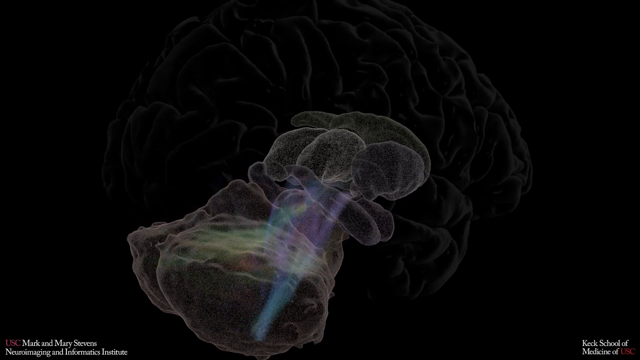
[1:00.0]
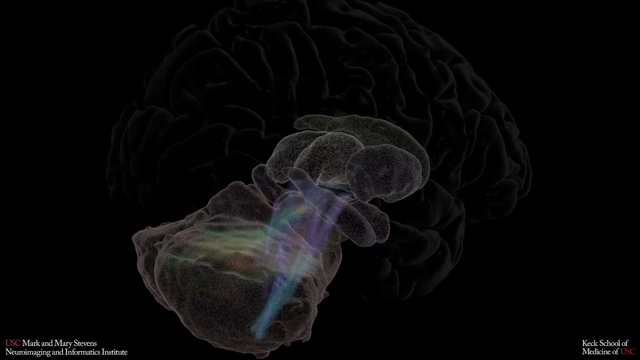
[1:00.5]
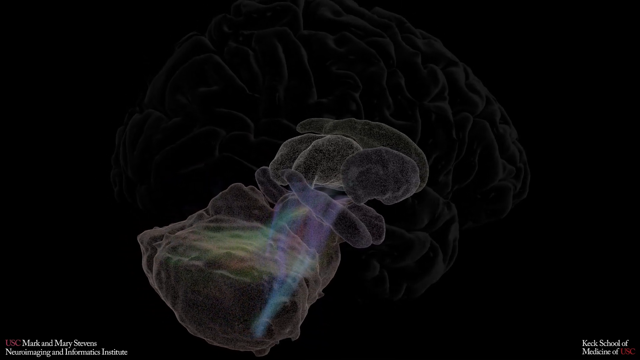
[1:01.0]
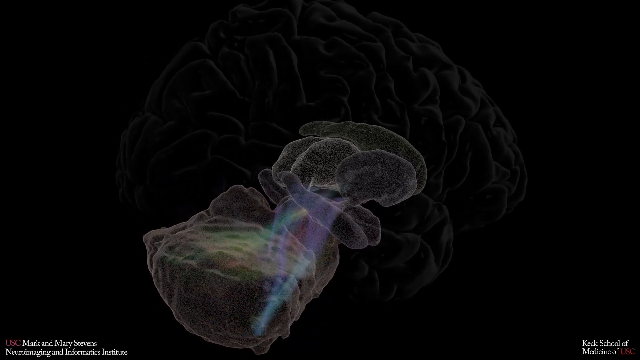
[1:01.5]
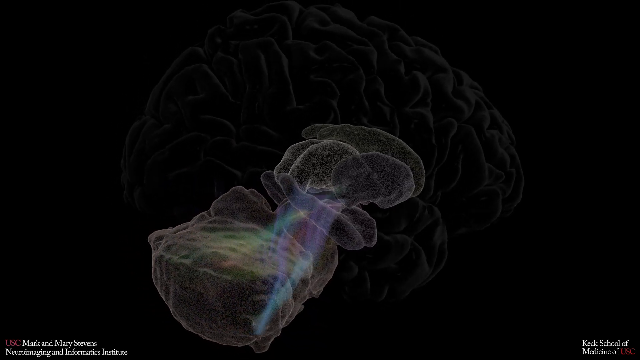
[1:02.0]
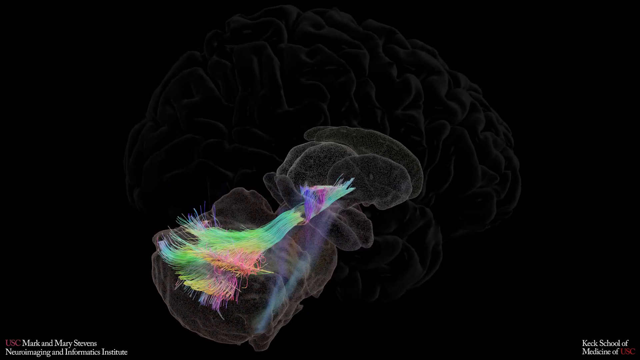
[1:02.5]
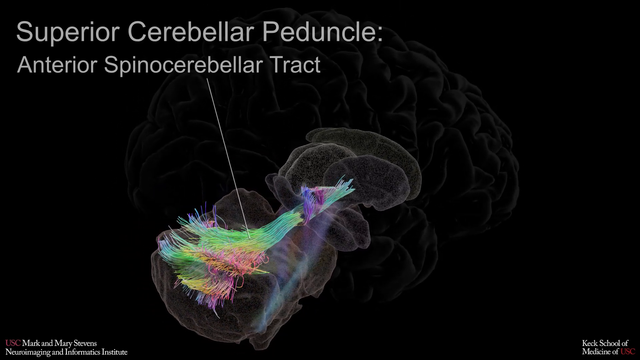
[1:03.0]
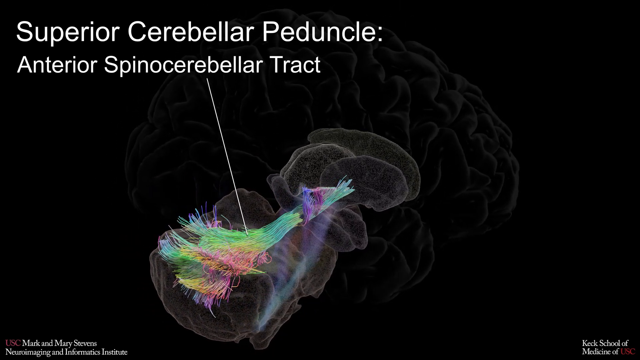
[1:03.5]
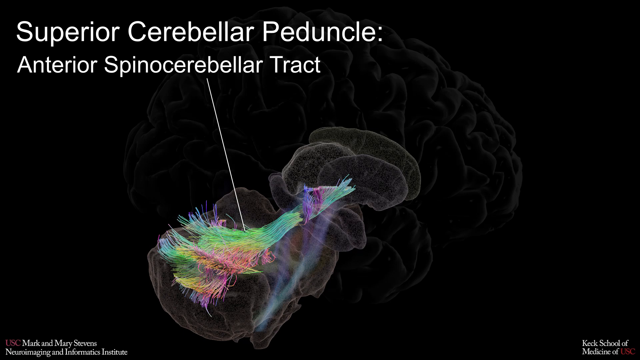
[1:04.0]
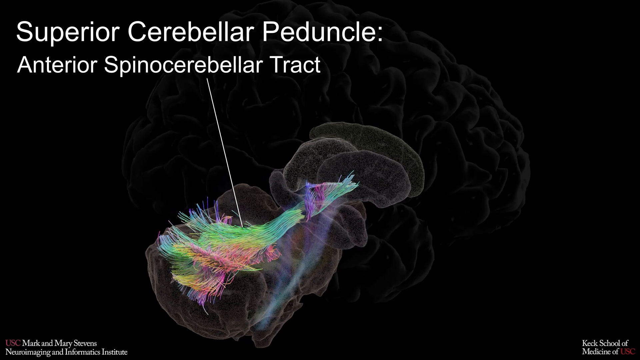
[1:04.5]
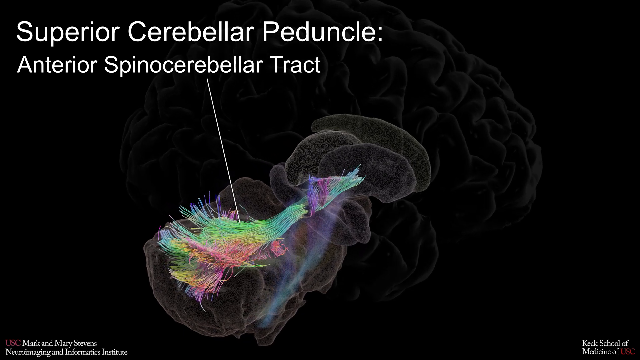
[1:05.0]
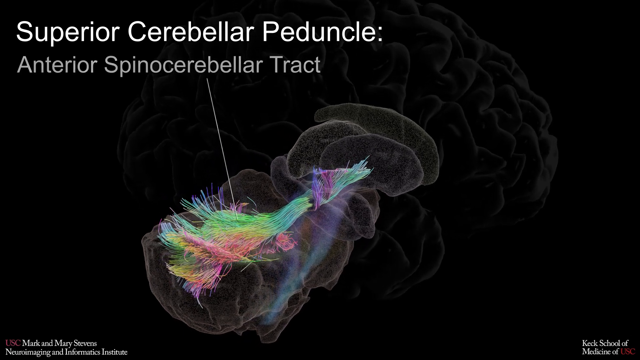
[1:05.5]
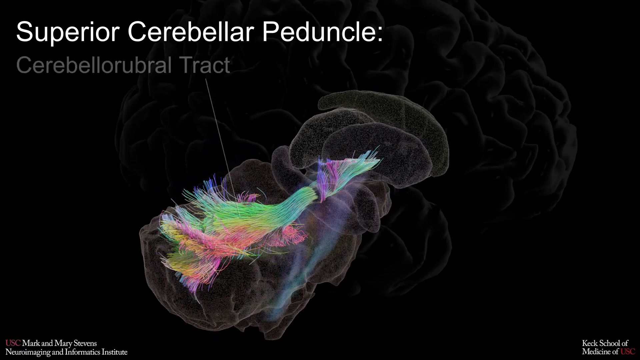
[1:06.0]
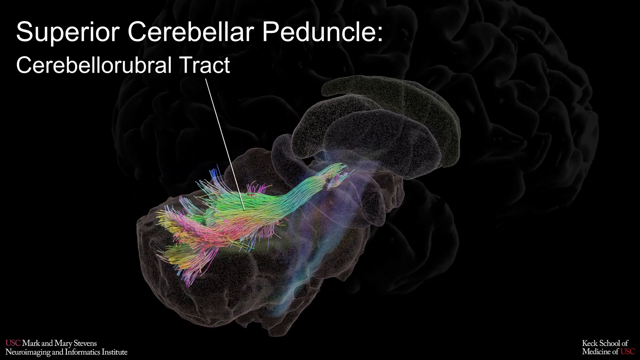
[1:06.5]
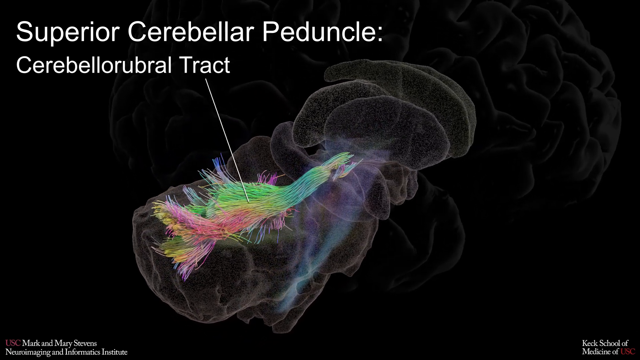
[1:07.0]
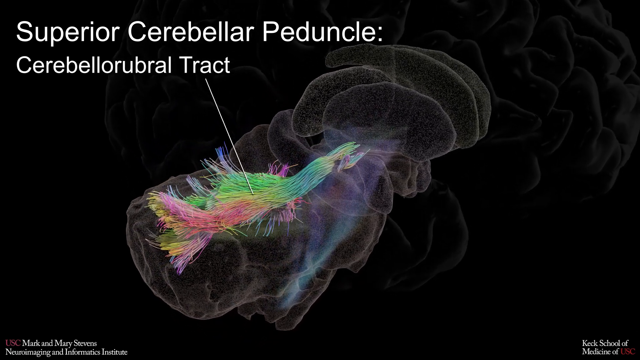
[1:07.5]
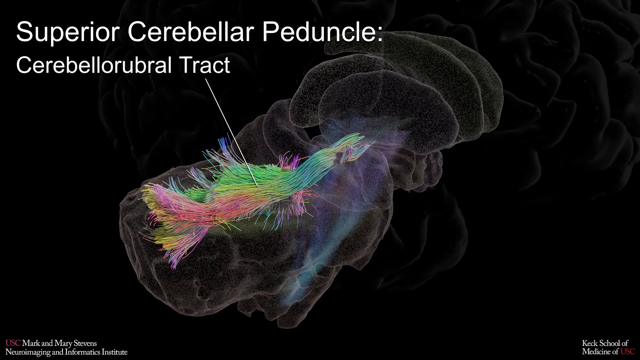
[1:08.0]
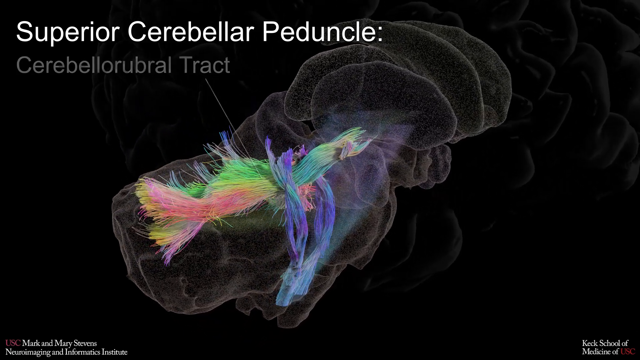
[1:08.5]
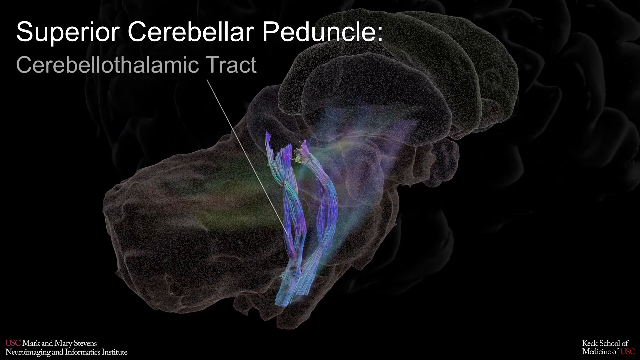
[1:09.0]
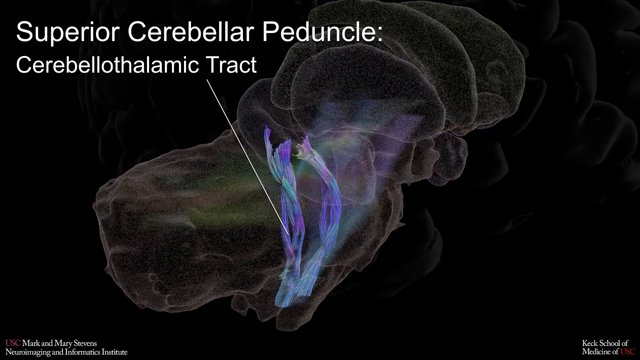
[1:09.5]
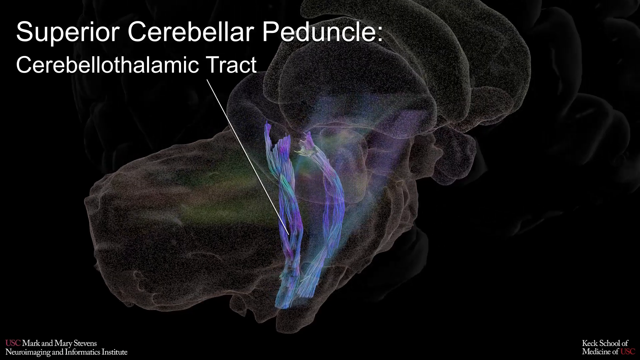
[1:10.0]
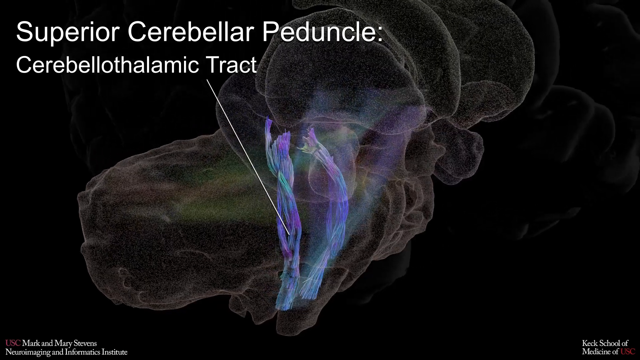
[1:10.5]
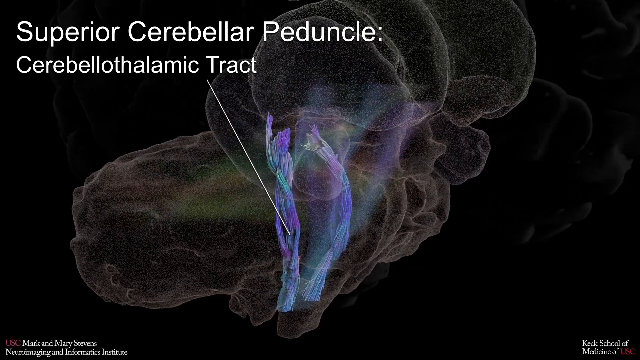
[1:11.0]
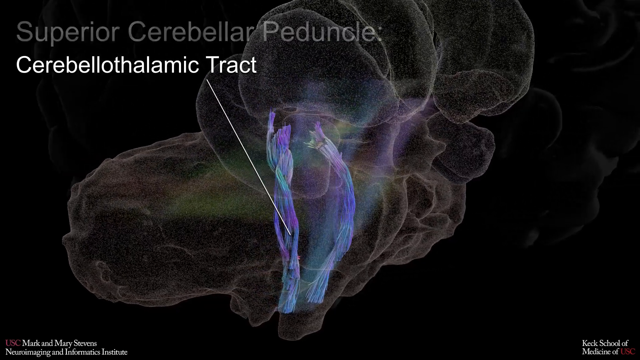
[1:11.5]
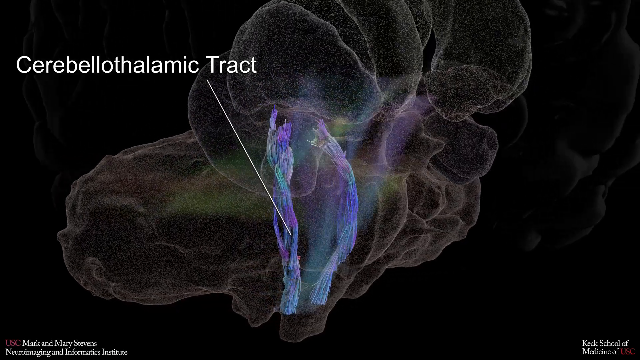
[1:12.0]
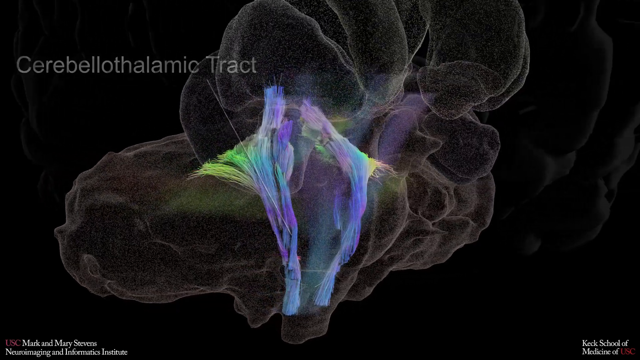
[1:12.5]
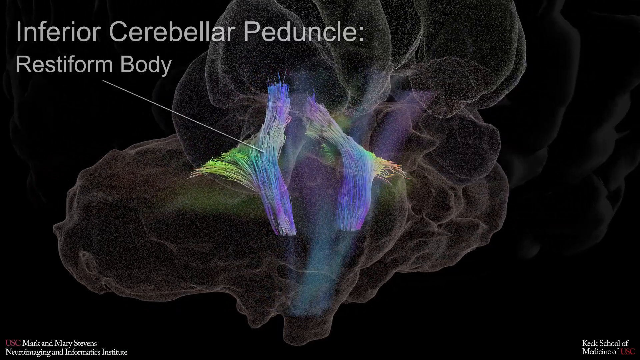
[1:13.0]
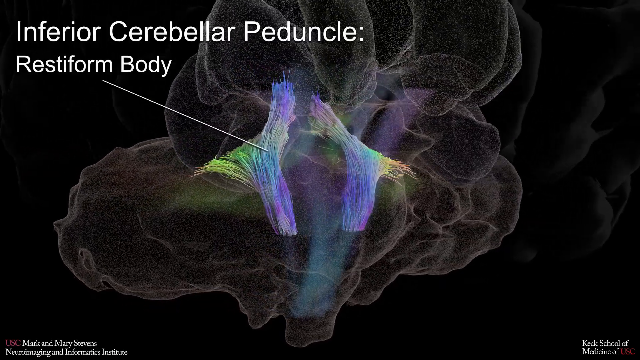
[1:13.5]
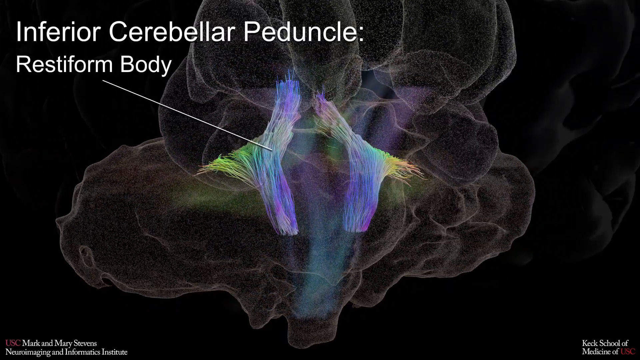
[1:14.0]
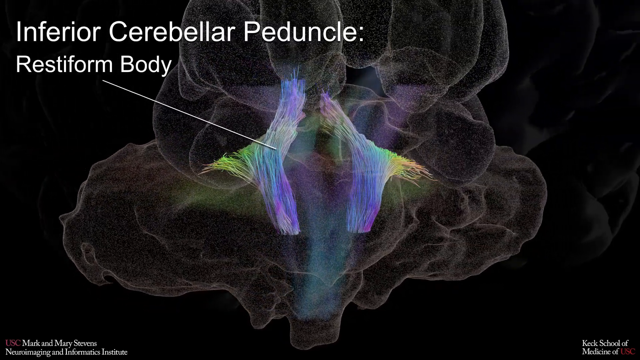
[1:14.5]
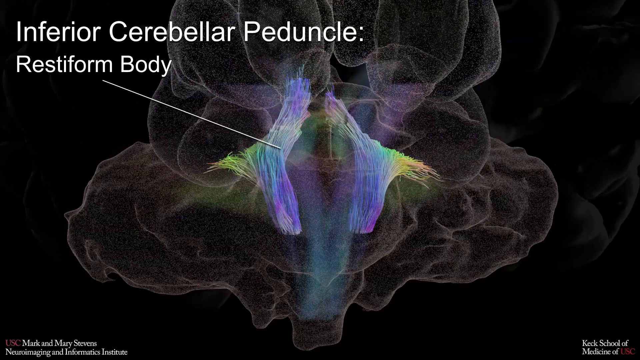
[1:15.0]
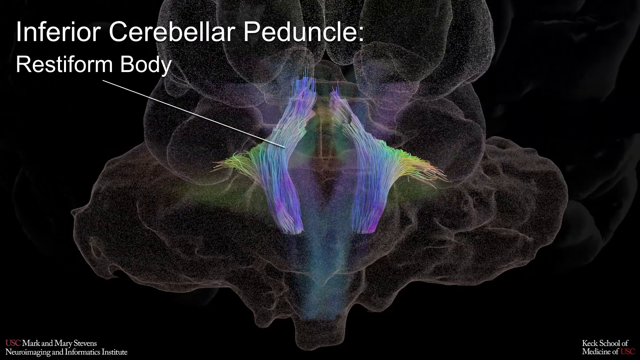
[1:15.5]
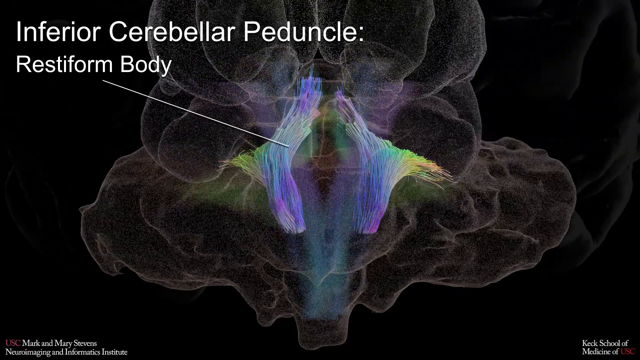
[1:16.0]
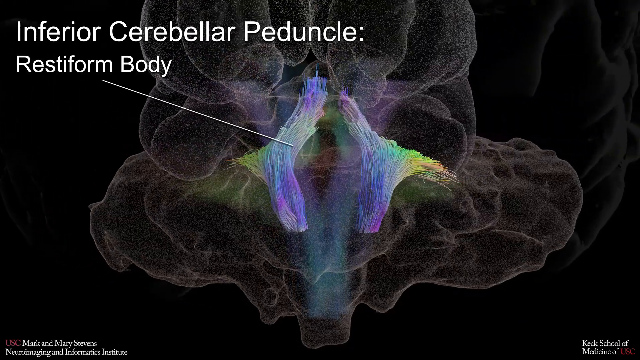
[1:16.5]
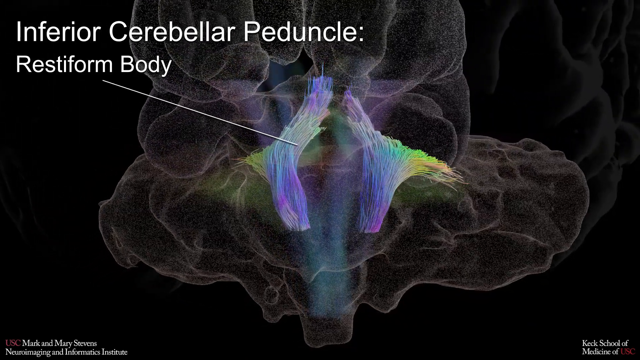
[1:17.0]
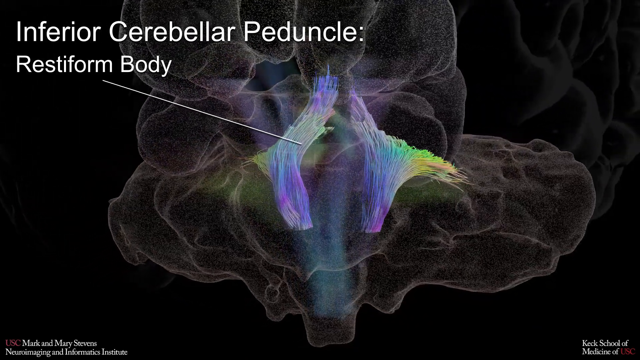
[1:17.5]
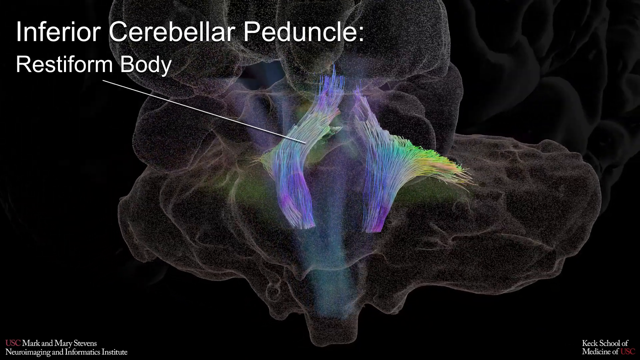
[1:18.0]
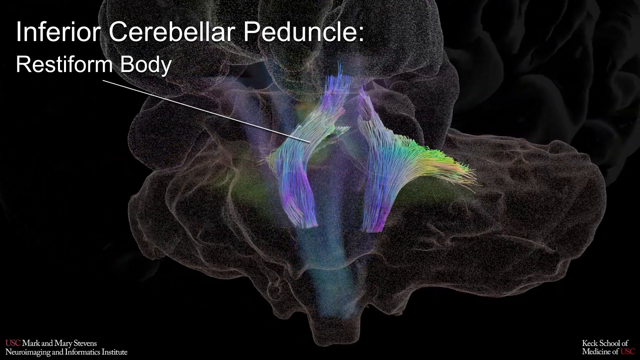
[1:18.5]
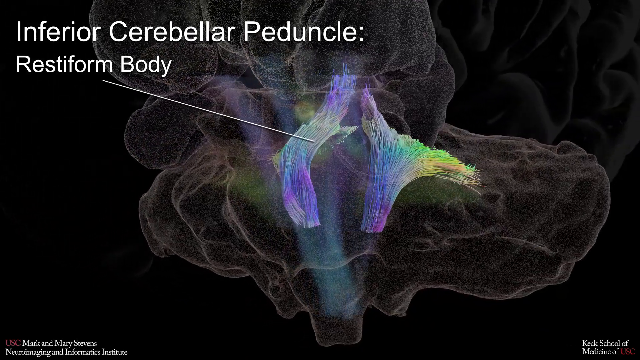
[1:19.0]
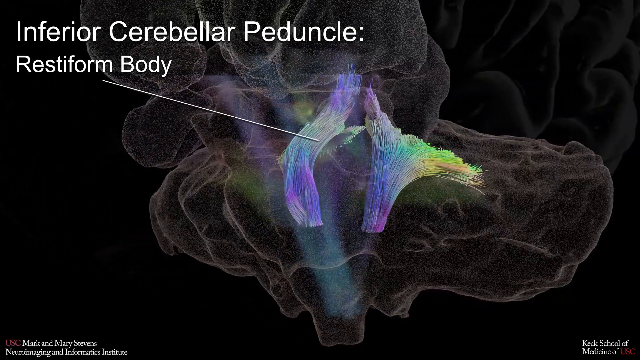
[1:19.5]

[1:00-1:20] A kind of gray and white brain, somewhat transparent, appears against a black background. Parts of the brain are visible, with kind of holographic colors inside, including purple, yellow, green and blue. The brain moves on camera, and fibers in neon colors pop up with a line connecting them to text that reads "superior cerebellar peduncle" and "anterior spinal cerebellar tract." As the brain keeps moving, more text reads "cerebellar rubral tract" while the camera kind of moves closer to the brain. Purple and blue stems pop up, and white text reads "cerebellothalamic tract" as the brain continues to spin. More text then pops up reading "restiform body."